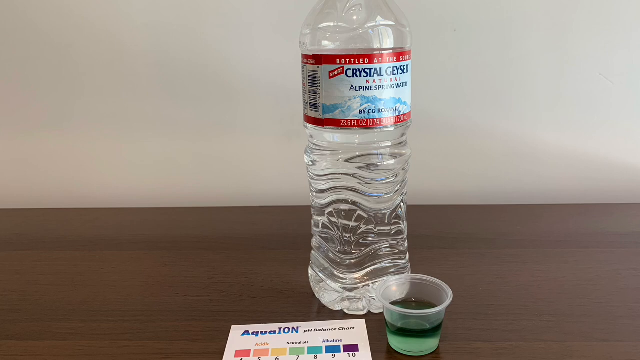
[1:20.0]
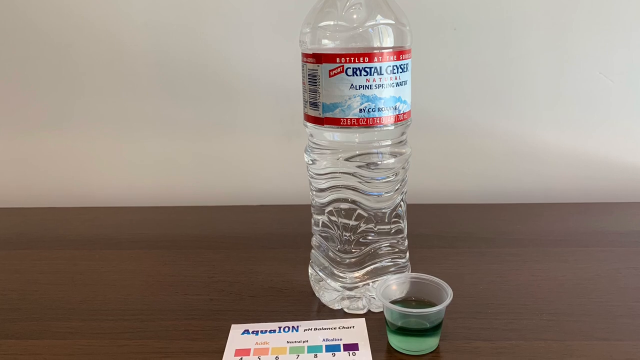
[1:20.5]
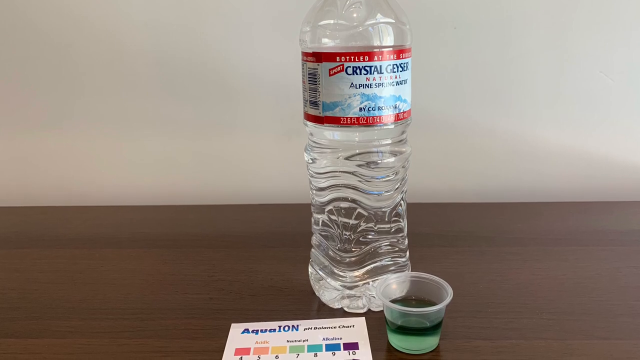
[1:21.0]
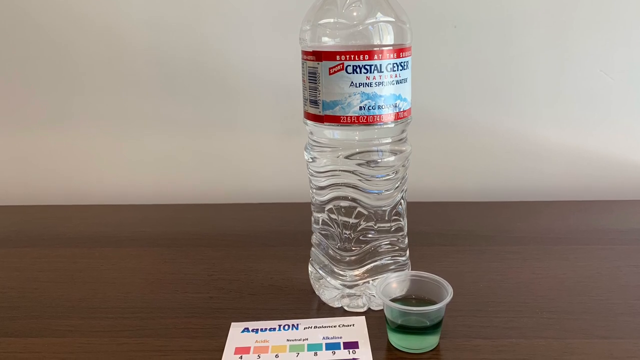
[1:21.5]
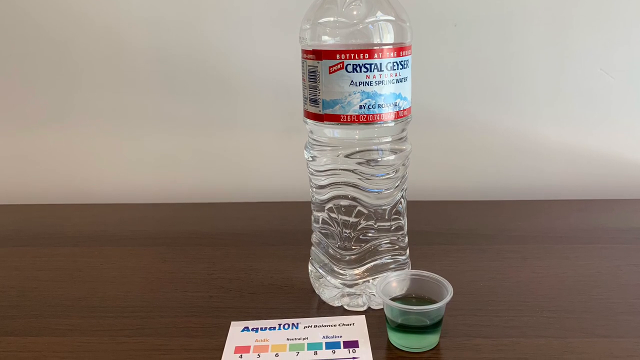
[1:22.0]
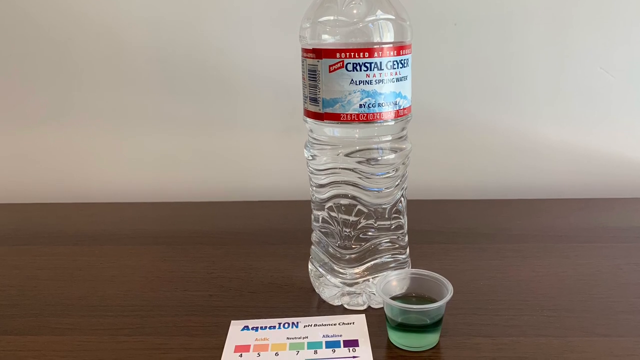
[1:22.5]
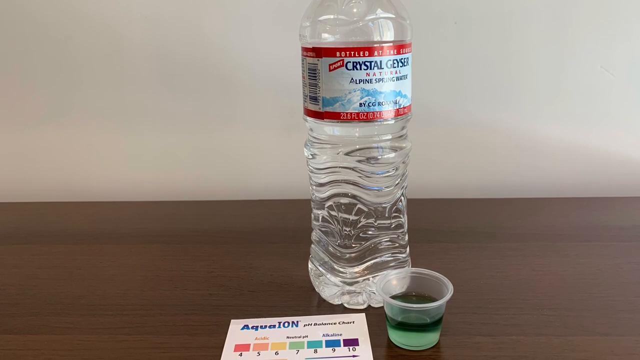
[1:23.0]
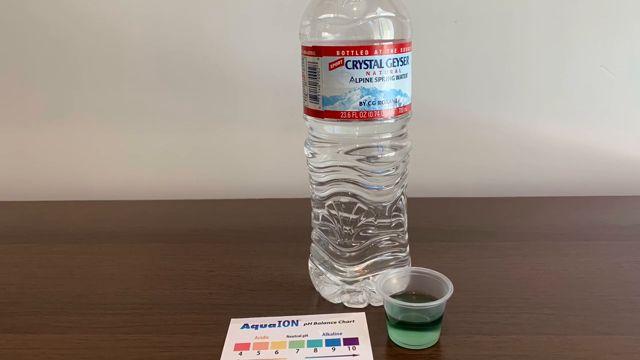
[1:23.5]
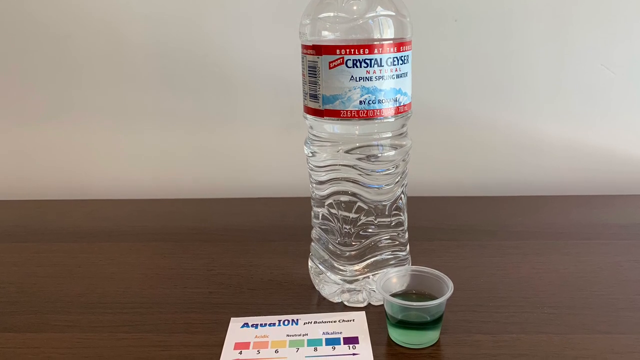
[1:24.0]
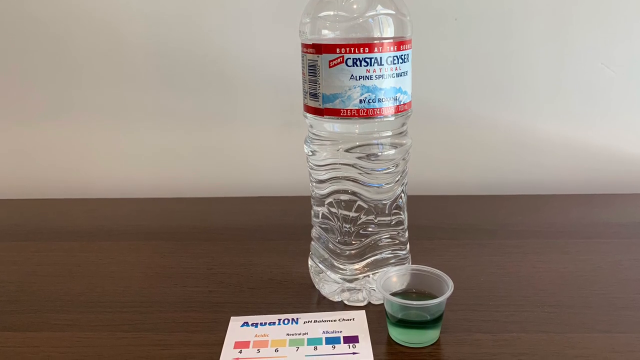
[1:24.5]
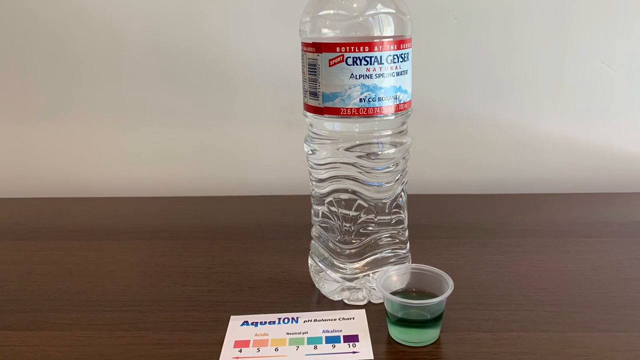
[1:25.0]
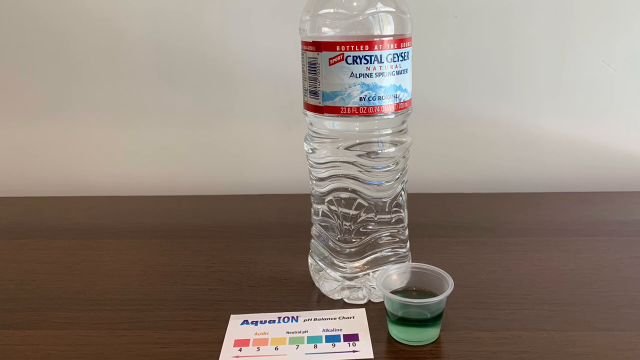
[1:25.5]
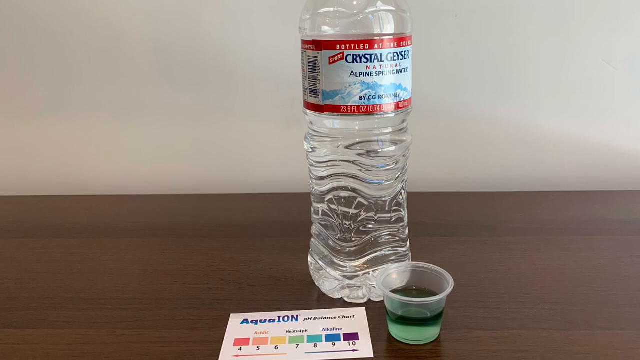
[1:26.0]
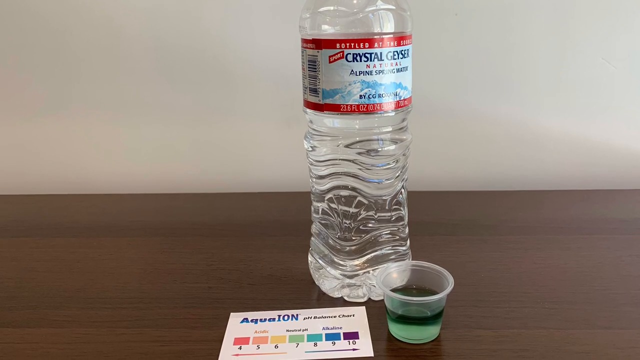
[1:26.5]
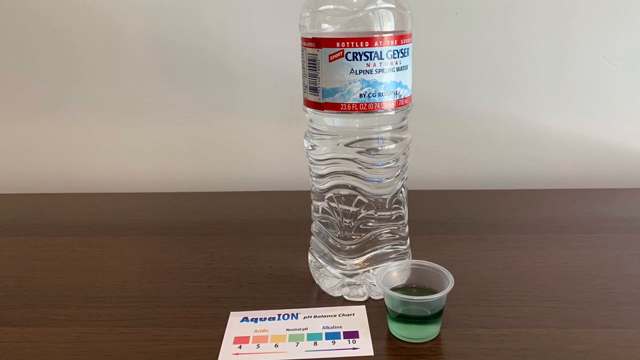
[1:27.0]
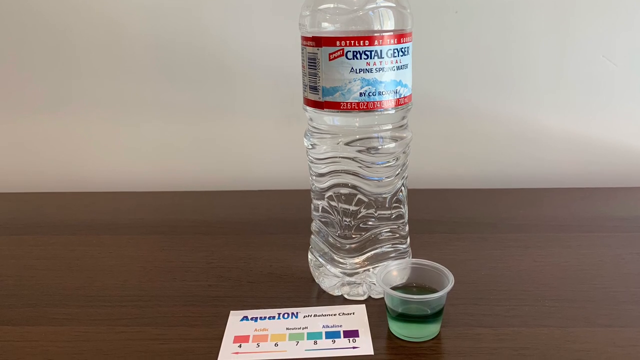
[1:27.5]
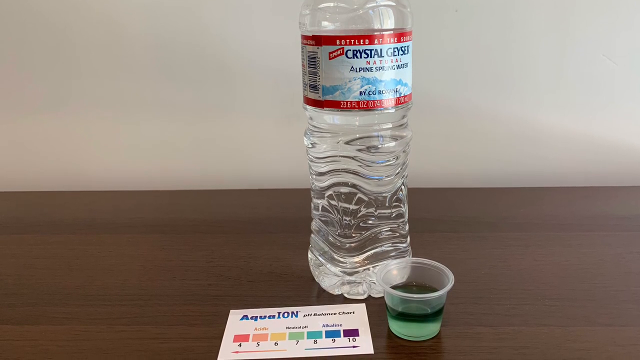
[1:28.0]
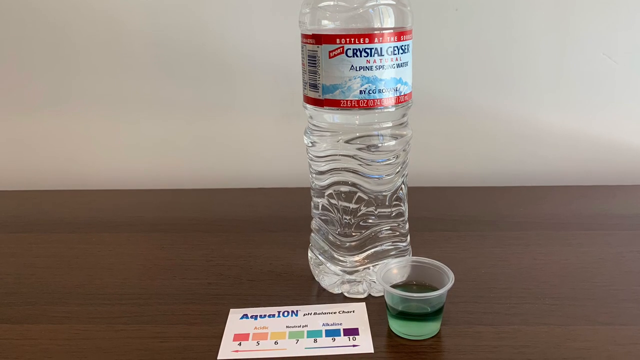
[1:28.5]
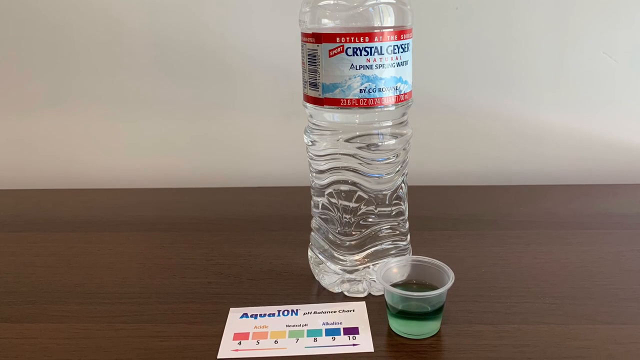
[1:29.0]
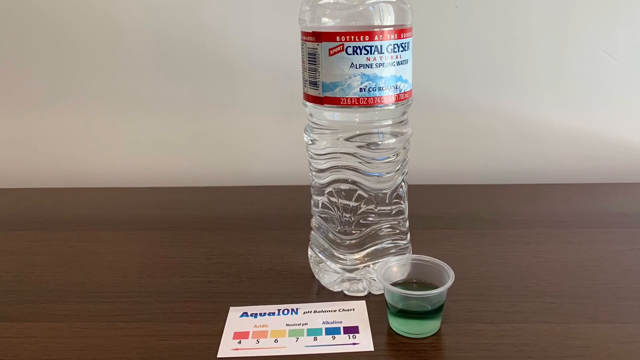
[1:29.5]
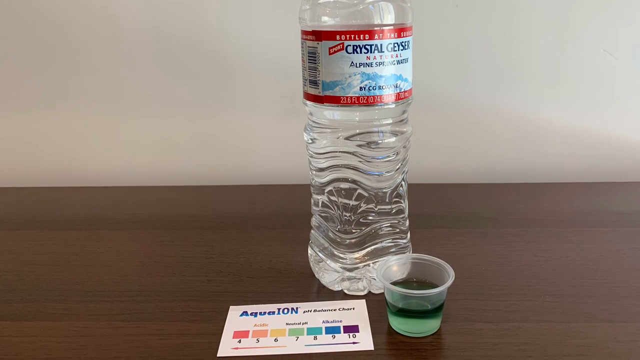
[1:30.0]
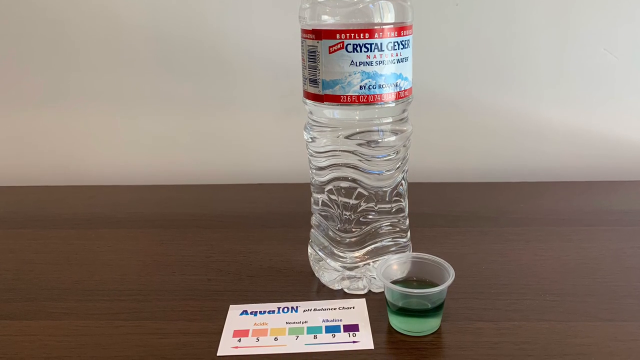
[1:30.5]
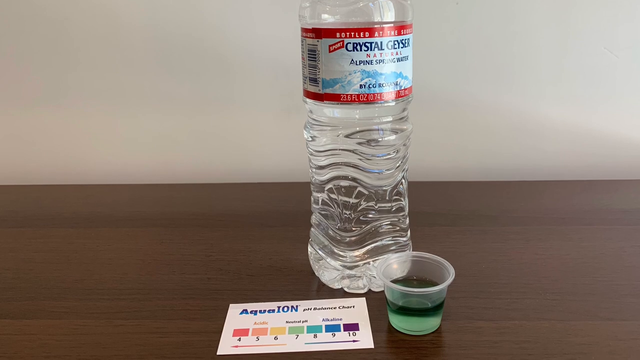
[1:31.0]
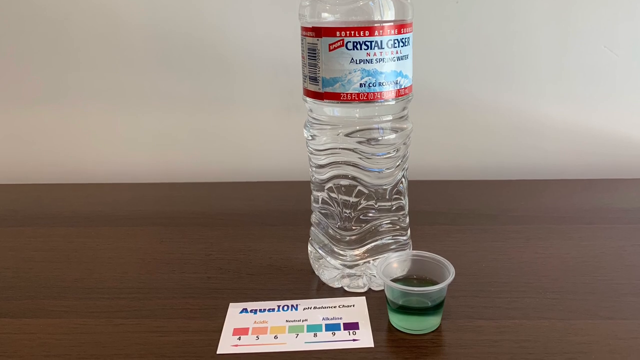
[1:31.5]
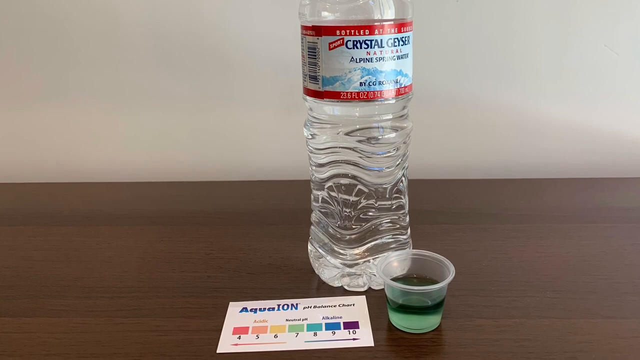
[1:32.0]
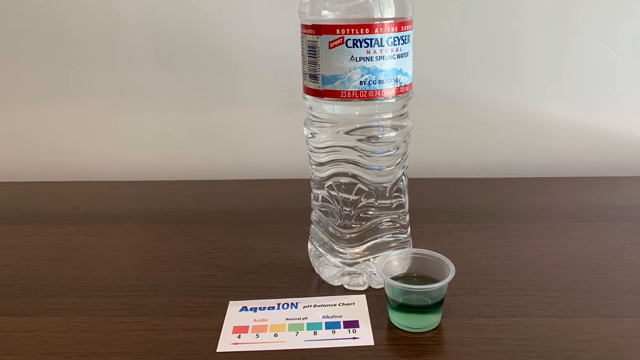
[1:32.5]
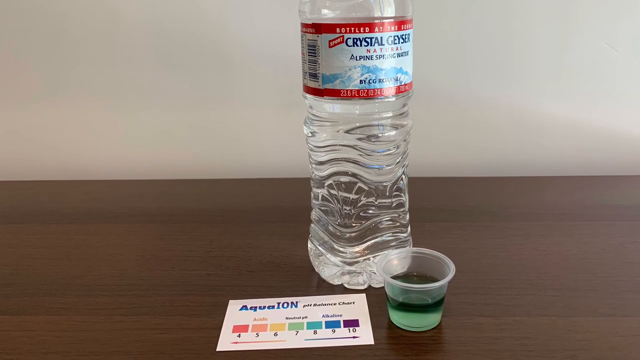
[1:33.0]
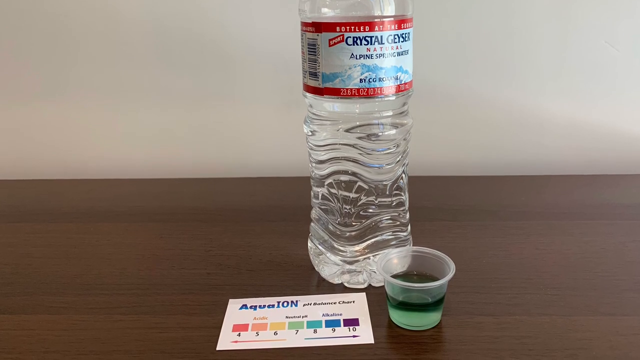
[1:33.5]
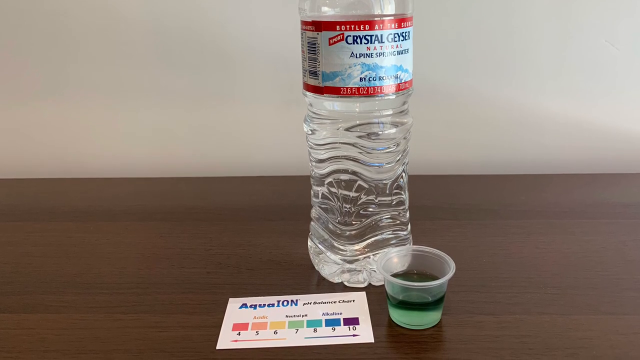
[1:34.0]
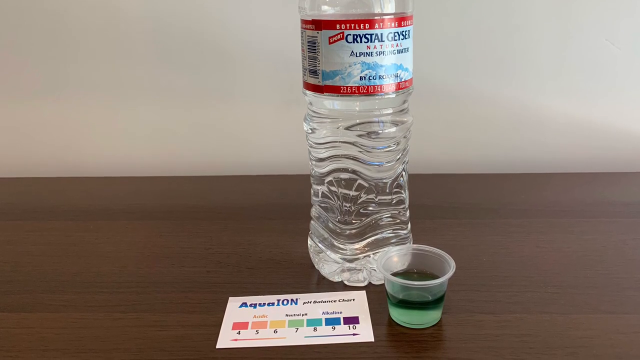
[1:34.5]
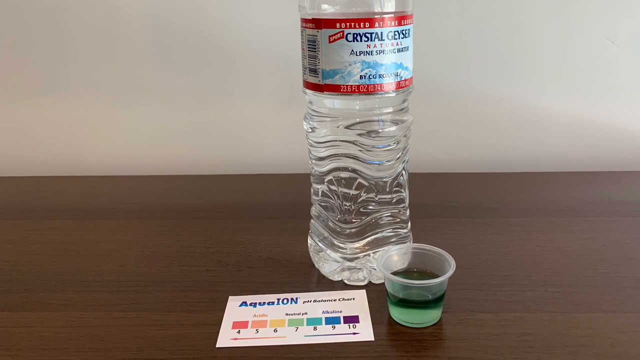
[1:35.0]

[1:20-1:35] The view now shows just the water bottle, with the front of its Crystal Geyser Natural Alpine Spring water label visible. The small plastic medicine cup is in front of the bottle toward the camera on the right side, and the Aqua Ion pH balance chart is in front of the bottle on the left side. The camera is mostly still, moving just slightly downward. There is nothing else on the table, a wood table with a medium stain, and the back wall is a white cream color. The plastic cup with the measuring stick, the red drops and the TDS parts per million paper are no longer in view.